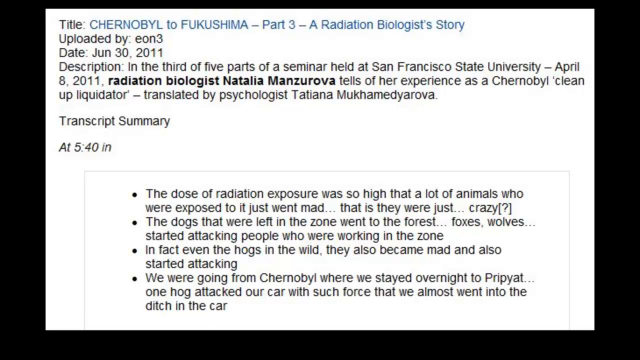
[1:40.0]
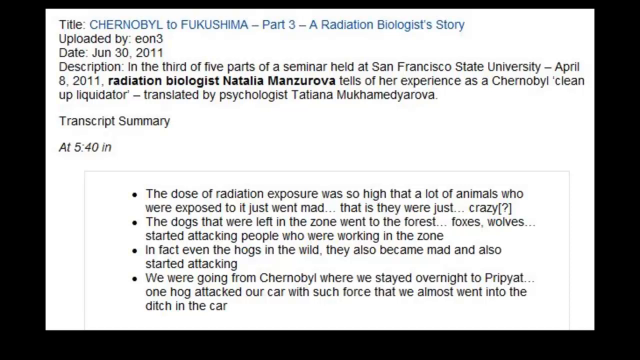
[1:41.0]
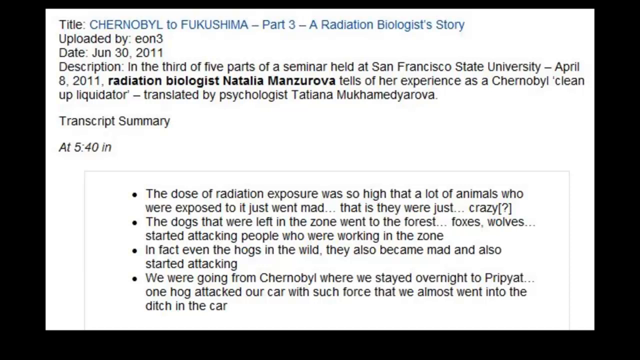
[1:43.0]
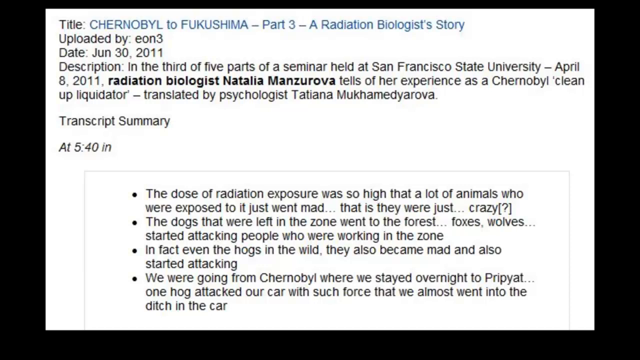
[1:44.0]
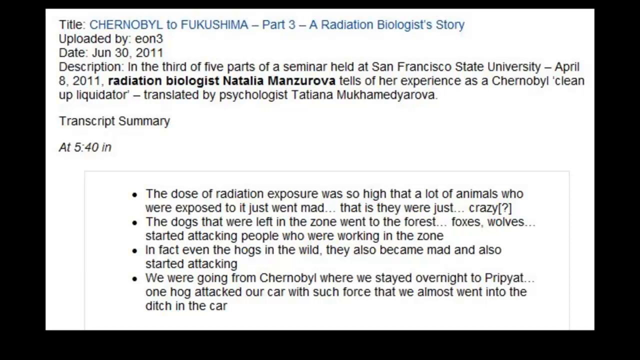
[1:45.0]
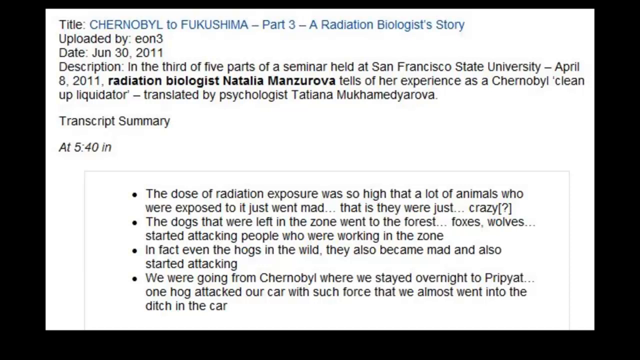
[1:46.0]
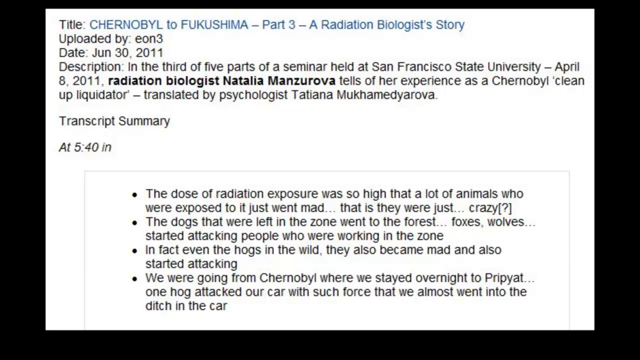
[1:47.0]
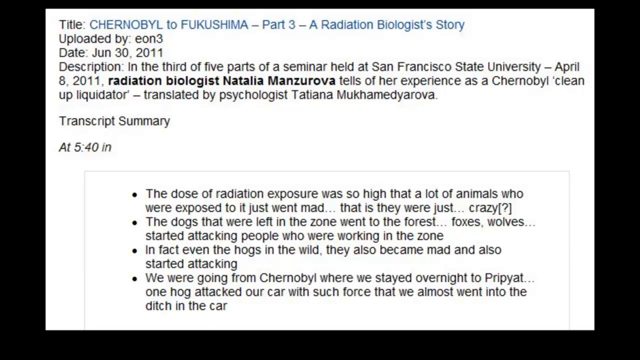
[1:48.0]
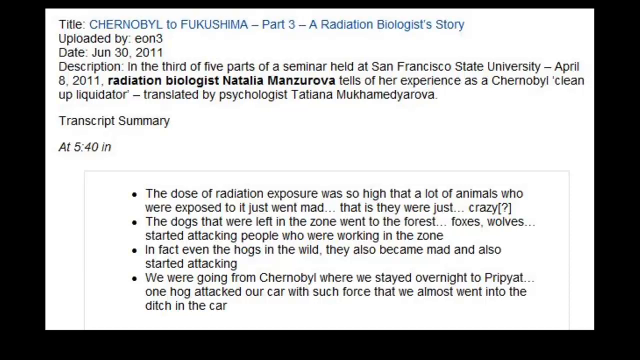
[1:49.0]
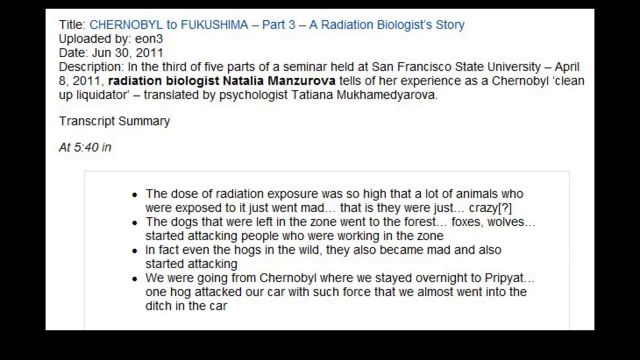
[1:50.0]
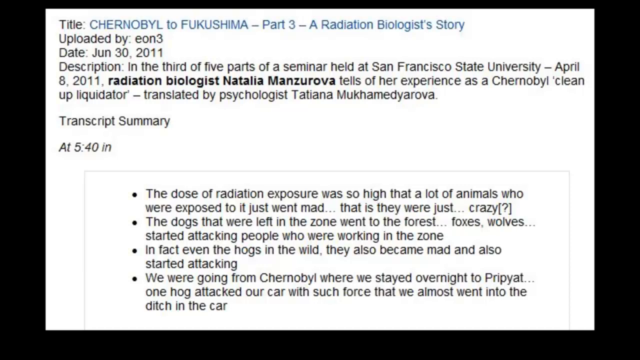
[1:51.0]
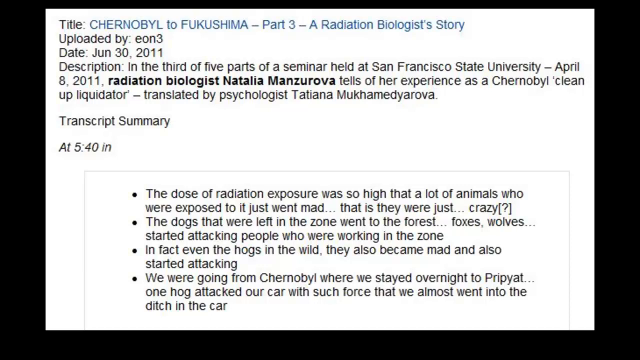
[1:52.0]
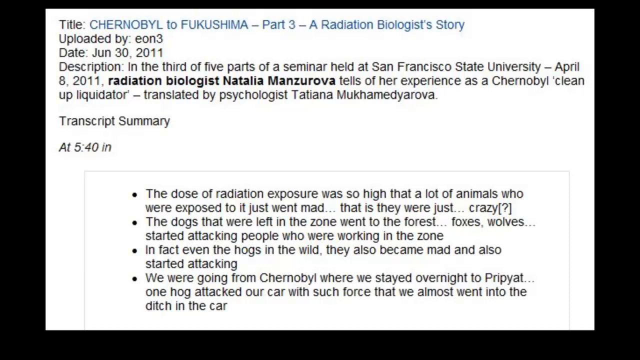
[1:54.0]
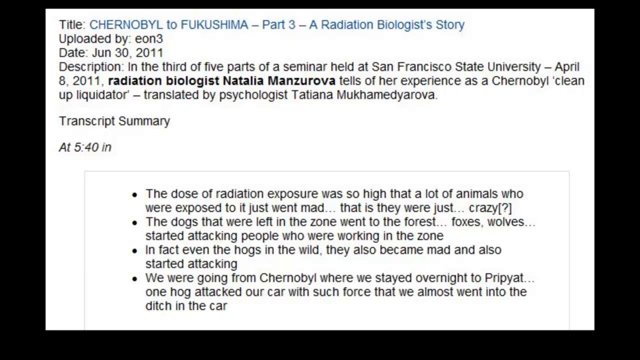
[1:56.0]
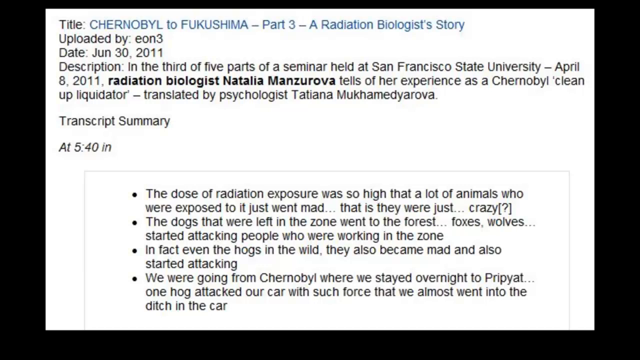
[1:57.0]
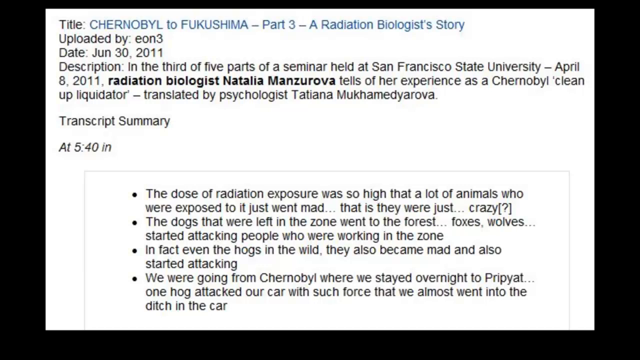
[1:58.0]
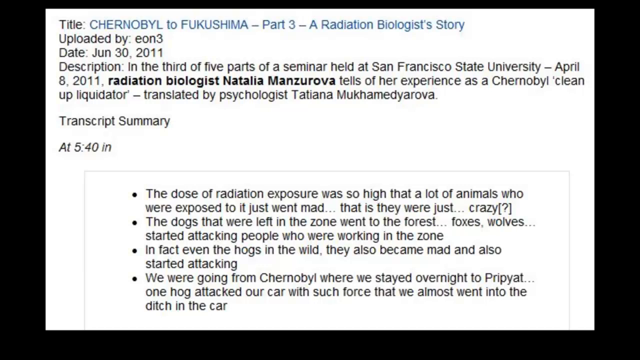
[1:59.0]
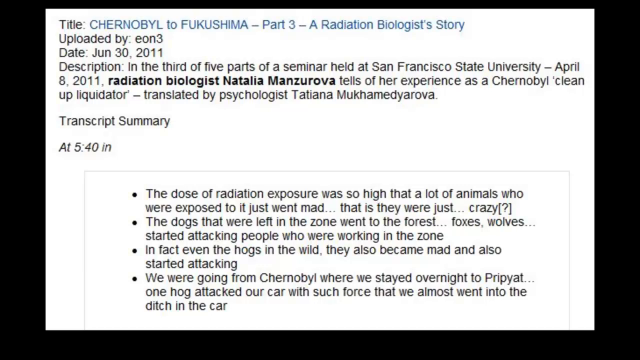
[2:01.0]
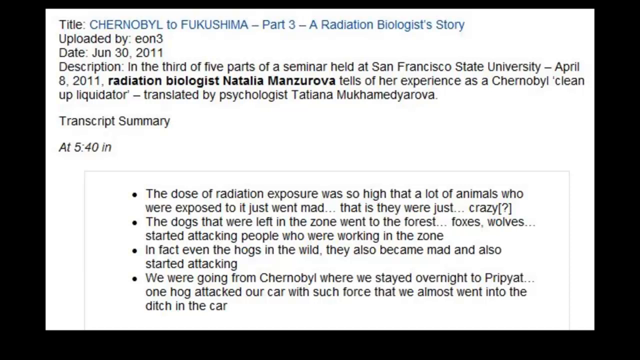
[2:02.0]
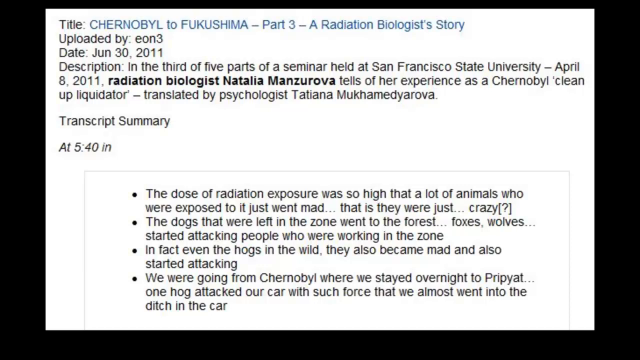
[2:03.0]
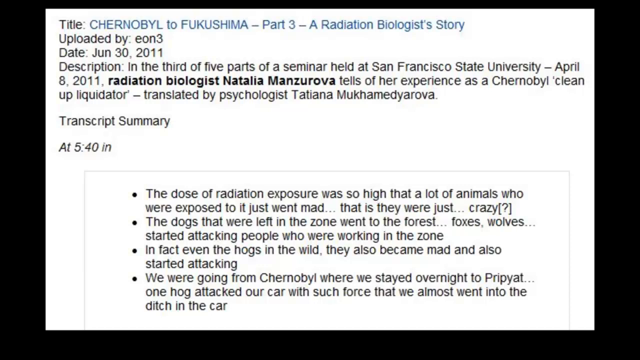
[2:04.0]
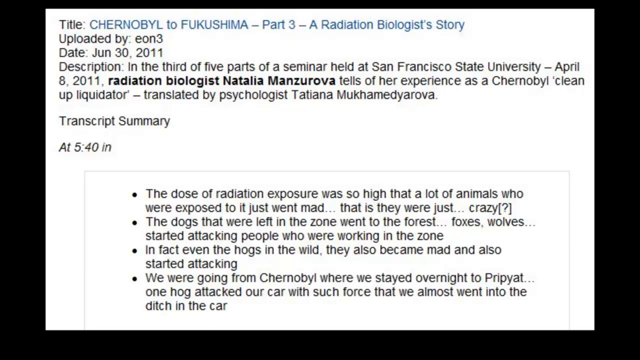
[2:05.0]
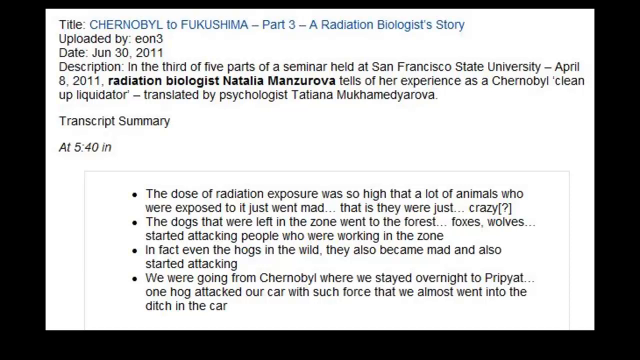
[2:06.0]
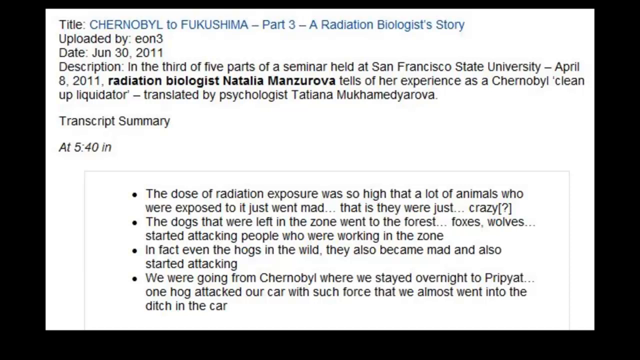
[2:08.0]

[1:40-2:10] Black text on a white background shows a title about Chernobyl and a description mentioning San Francisco State University and a radiation biologist, Natalie O'Neill, telling her experiences of the Chernobyl cleanup, translated by a psychologist named Tatiana. The text continues that radiation was so high that animals exposed went crazy, and that dogs left in the zone went into the forest and attacked people.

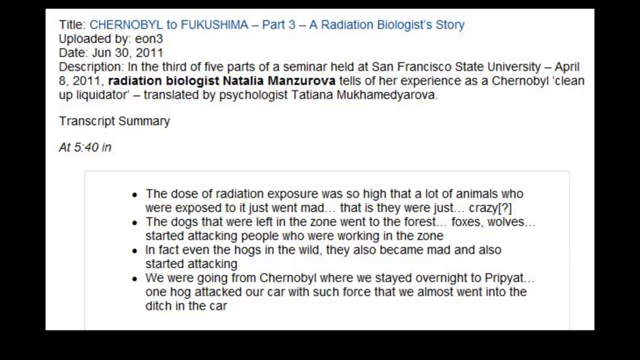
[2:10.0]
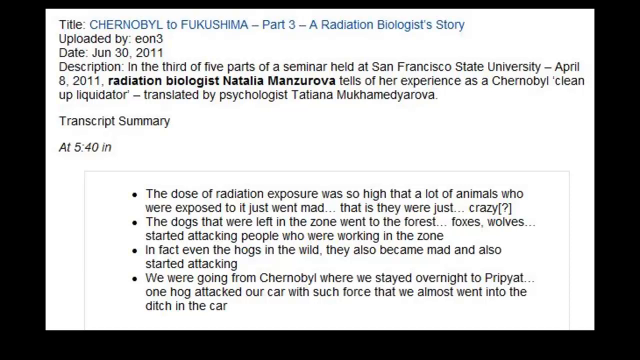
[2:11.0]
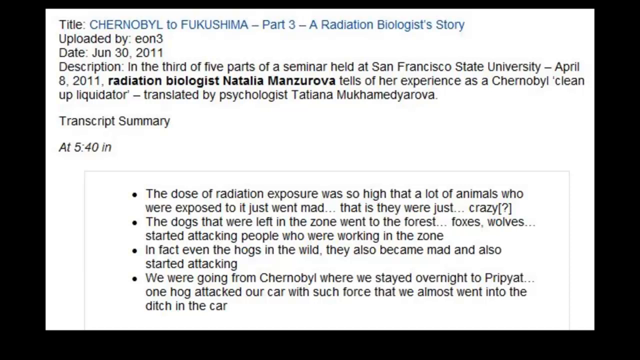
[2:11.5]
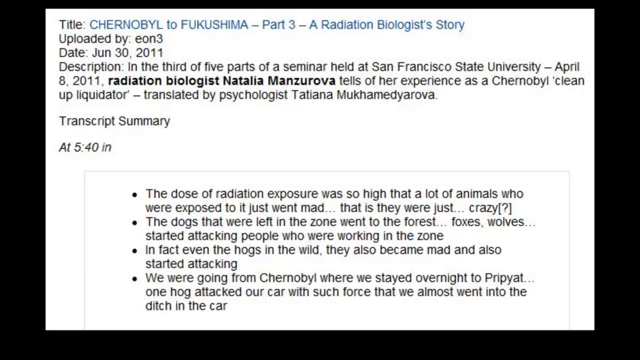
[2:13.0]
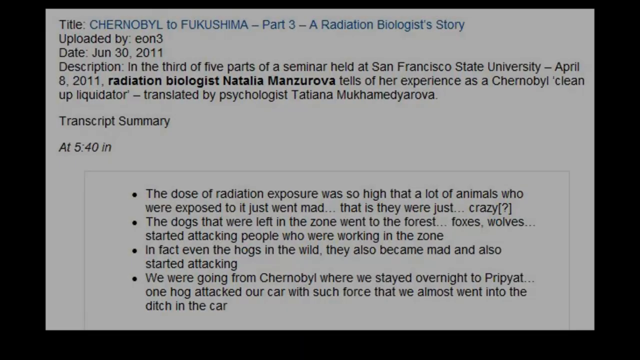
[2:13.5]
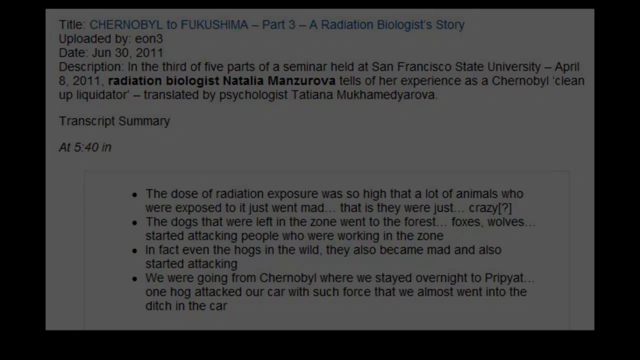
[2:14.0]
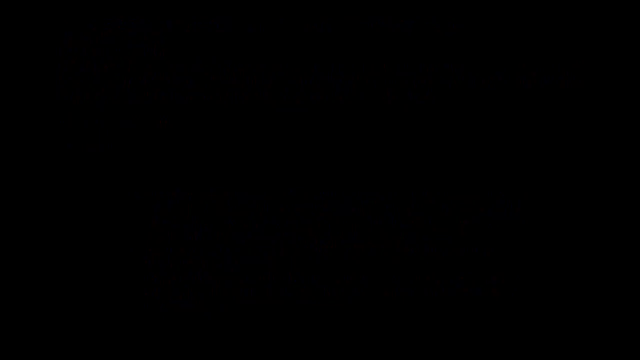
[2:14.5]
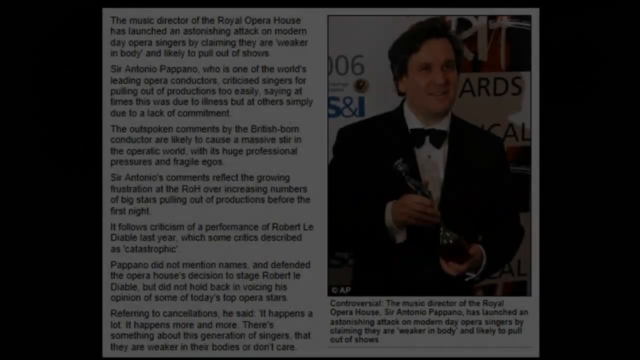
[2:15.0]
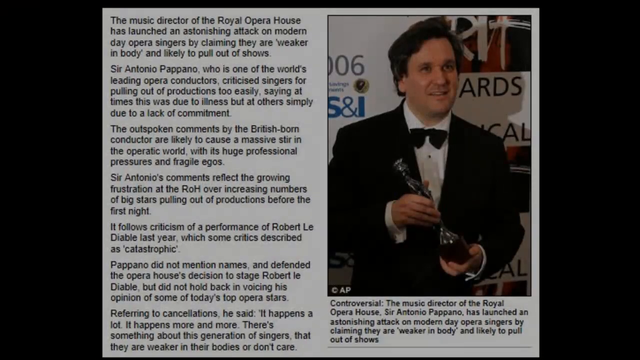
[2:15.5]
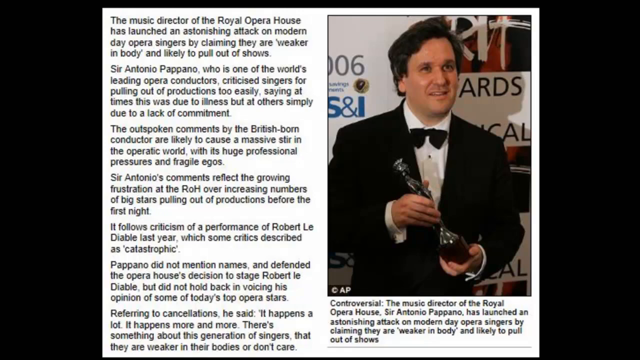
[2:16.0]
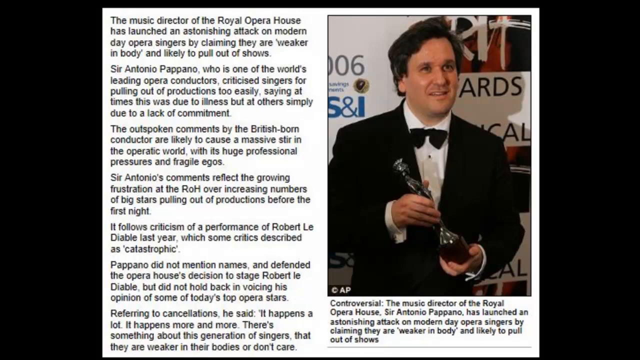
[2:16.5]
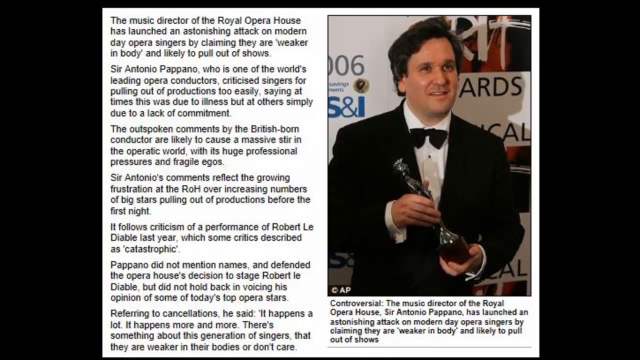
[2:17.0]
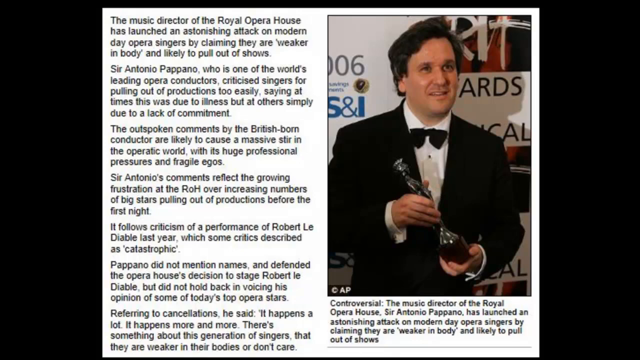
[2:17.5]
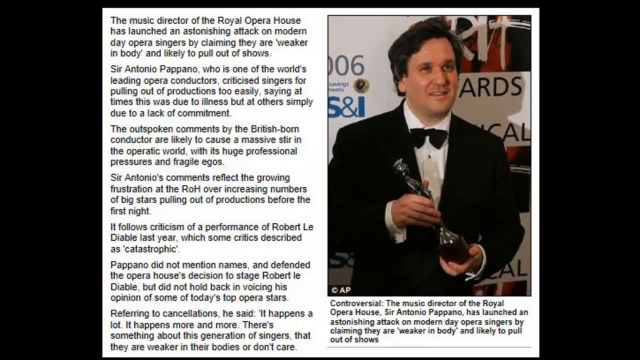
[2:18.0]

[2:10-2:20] Text on a white background appears next to an image of a musician holding up a trophy, apparently having won an award. The text says "Chernobyl to Fukushima," and a description mentions five parts of a seminar held at San Francisco State, with a radiation biologist describing the experience as a Chernobyl liquidator, translated by a psychologist.